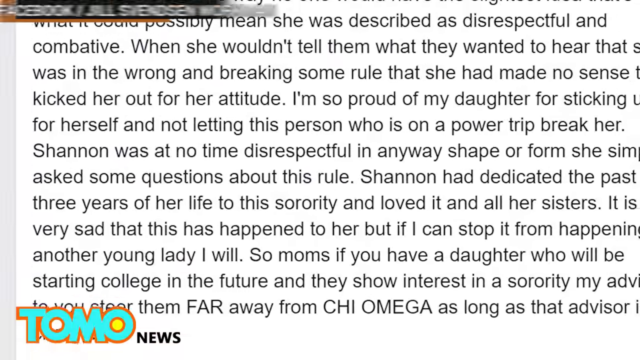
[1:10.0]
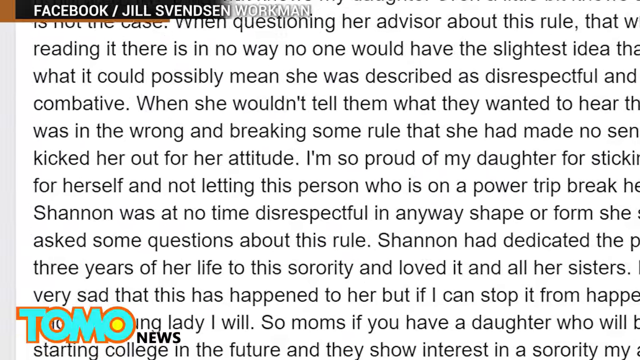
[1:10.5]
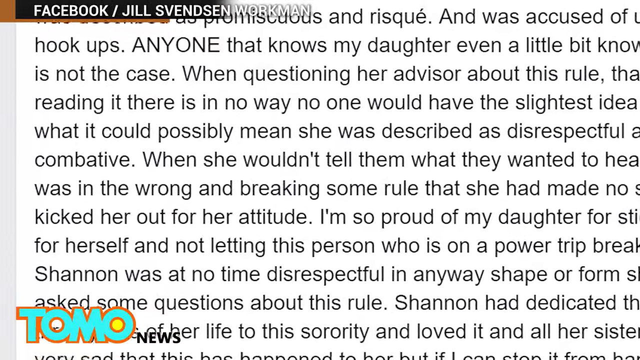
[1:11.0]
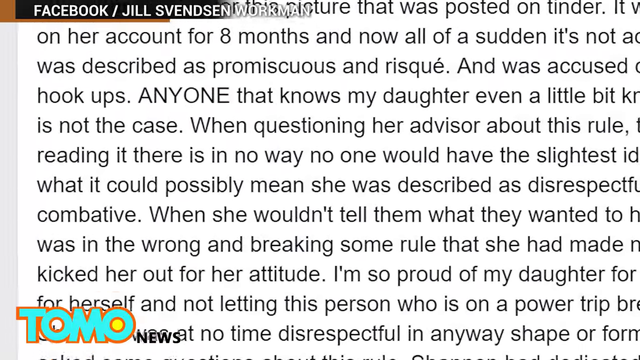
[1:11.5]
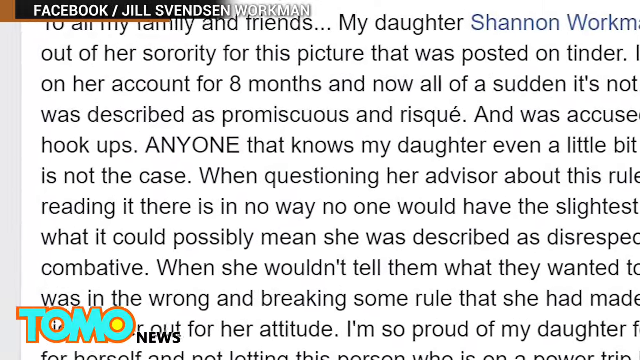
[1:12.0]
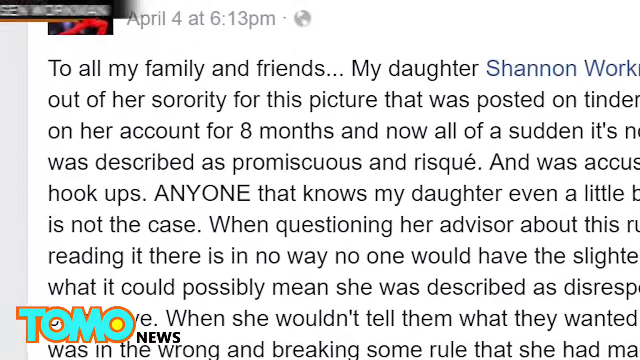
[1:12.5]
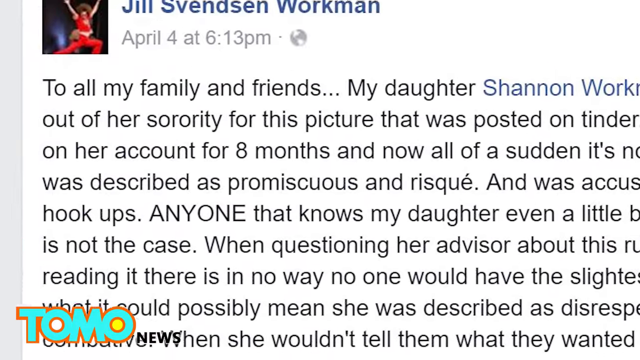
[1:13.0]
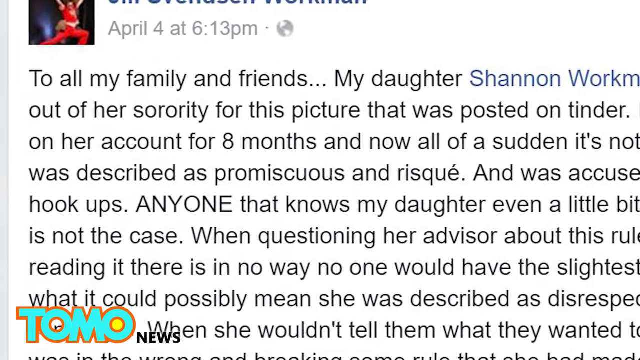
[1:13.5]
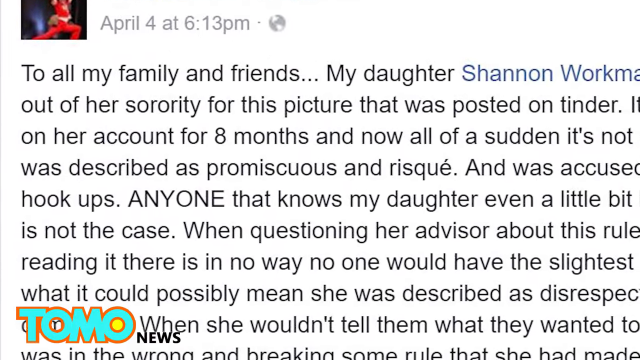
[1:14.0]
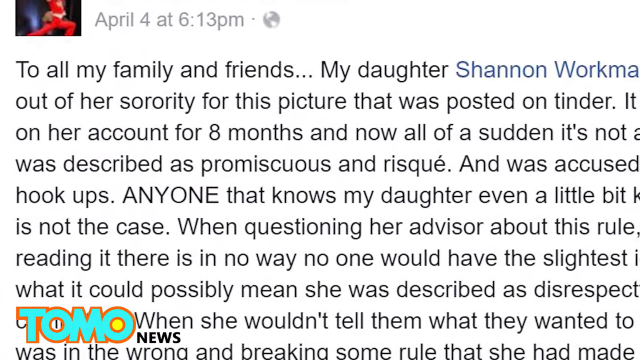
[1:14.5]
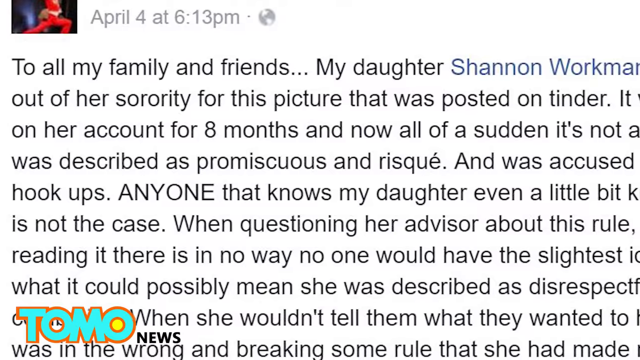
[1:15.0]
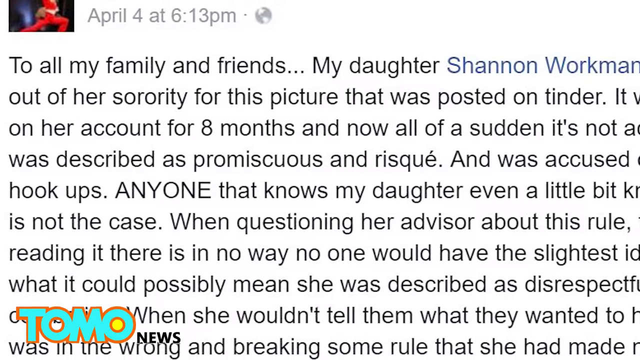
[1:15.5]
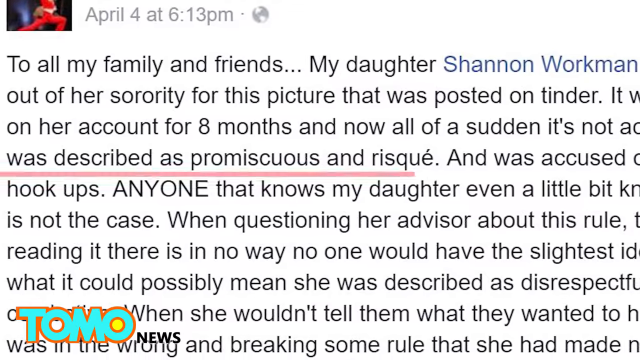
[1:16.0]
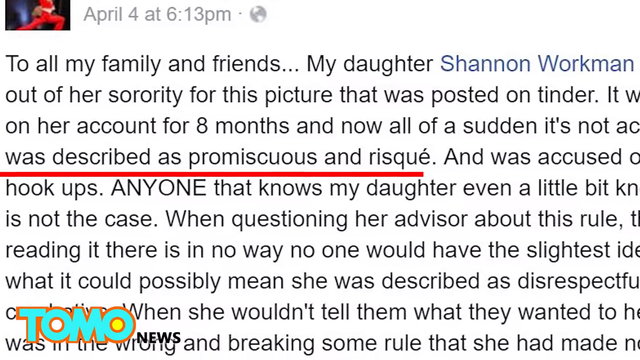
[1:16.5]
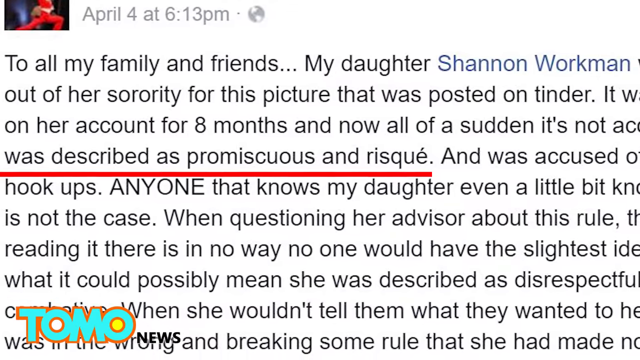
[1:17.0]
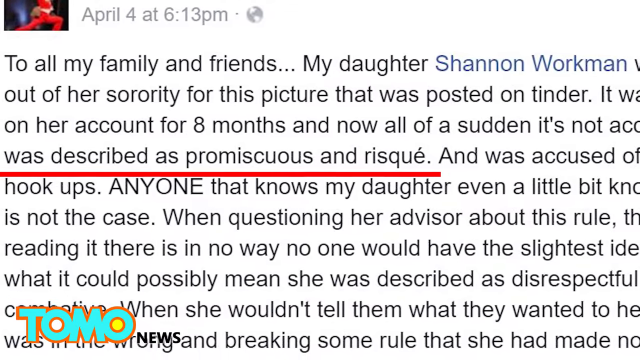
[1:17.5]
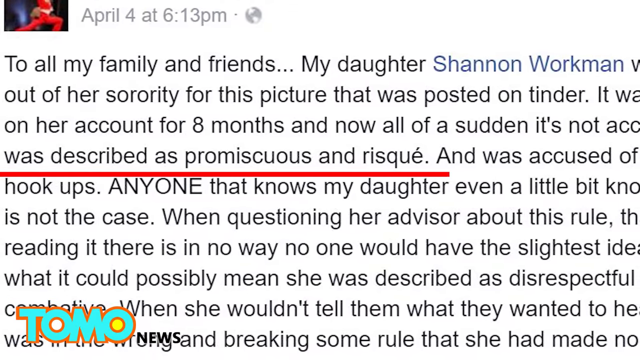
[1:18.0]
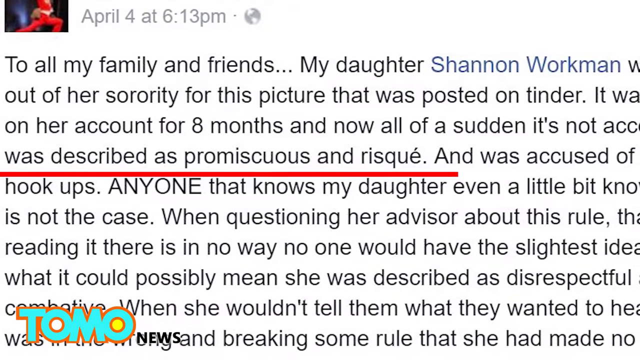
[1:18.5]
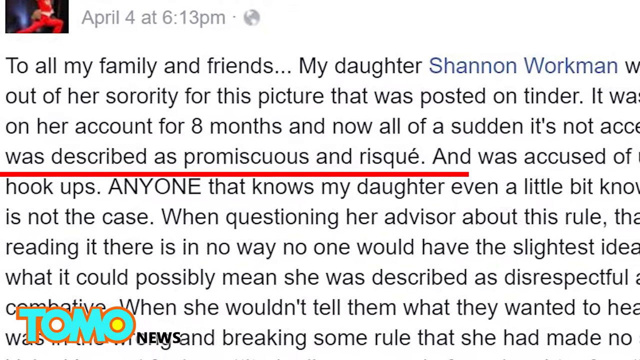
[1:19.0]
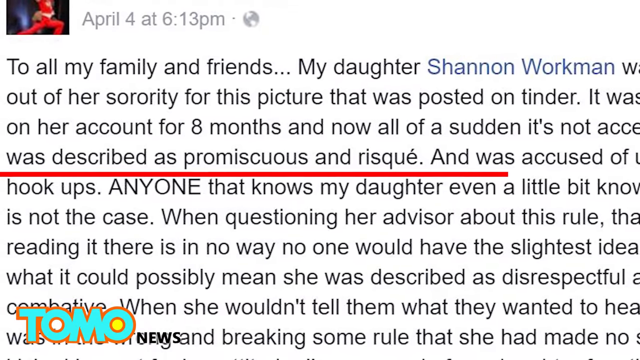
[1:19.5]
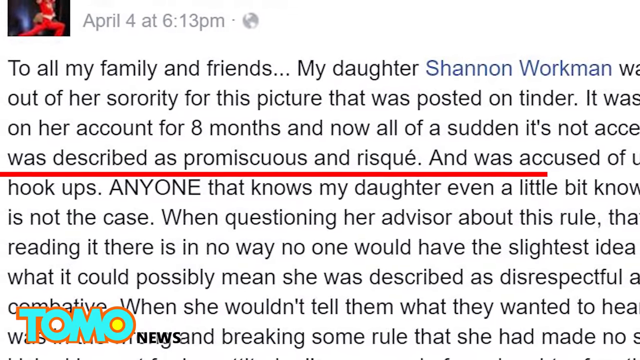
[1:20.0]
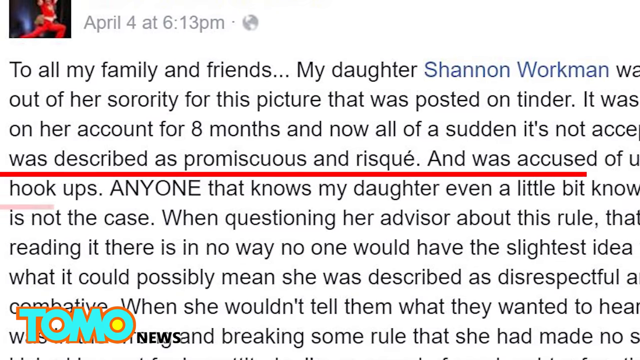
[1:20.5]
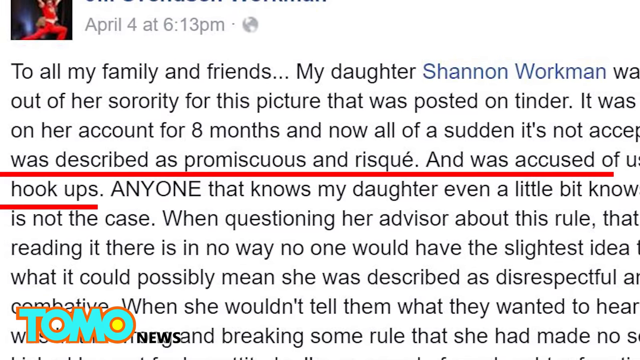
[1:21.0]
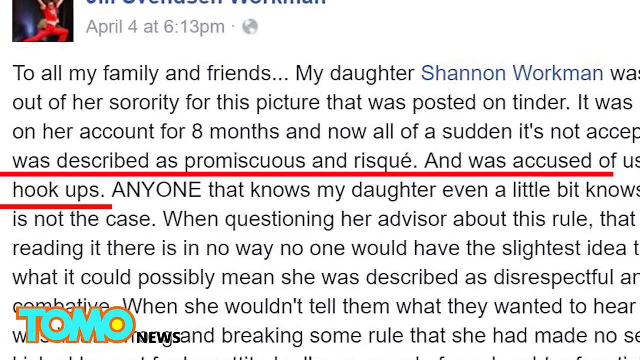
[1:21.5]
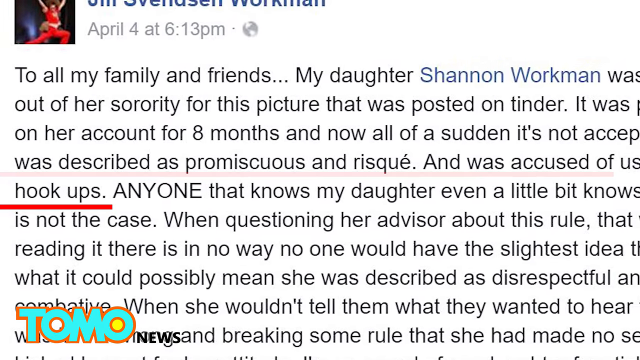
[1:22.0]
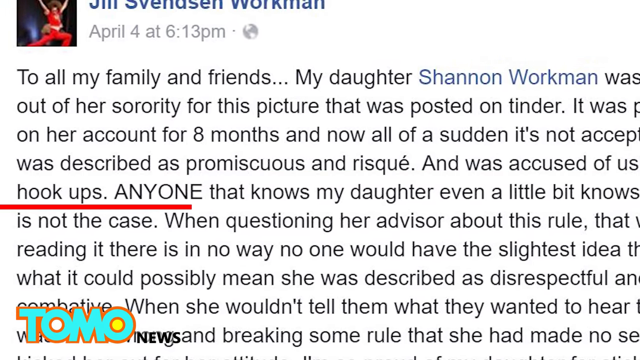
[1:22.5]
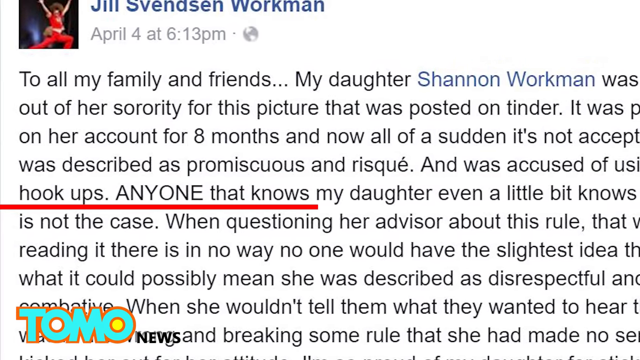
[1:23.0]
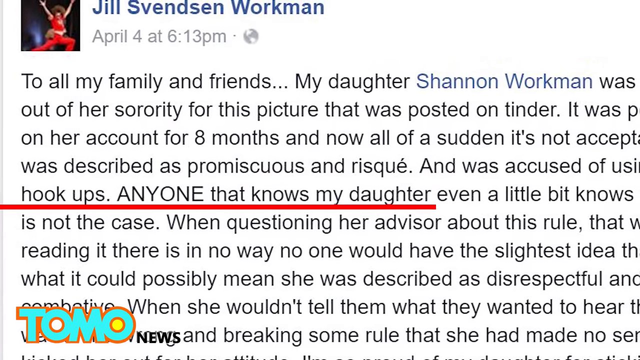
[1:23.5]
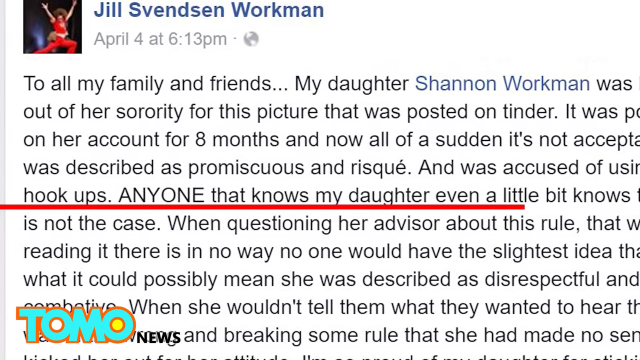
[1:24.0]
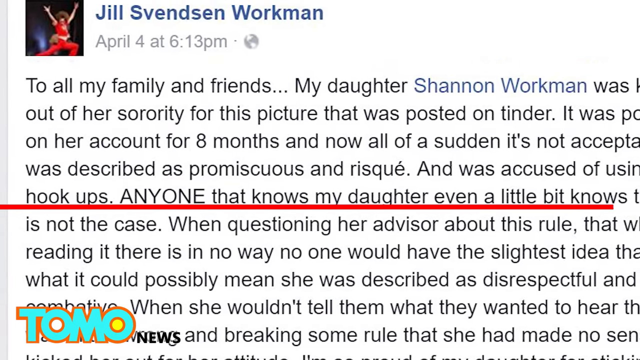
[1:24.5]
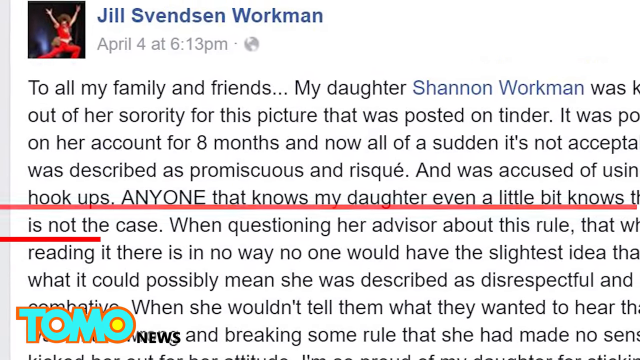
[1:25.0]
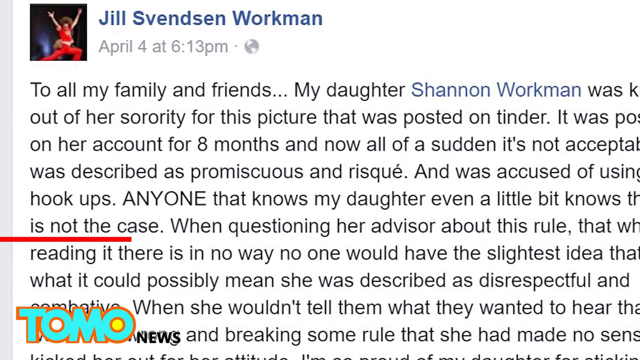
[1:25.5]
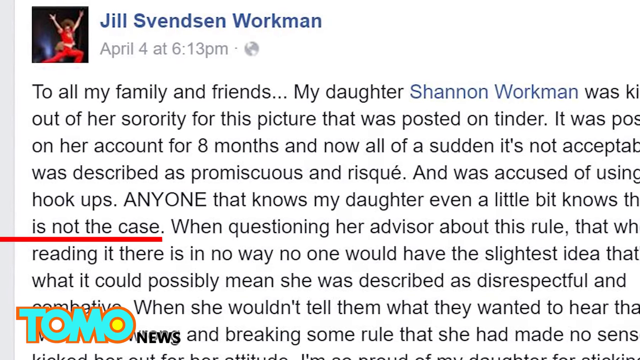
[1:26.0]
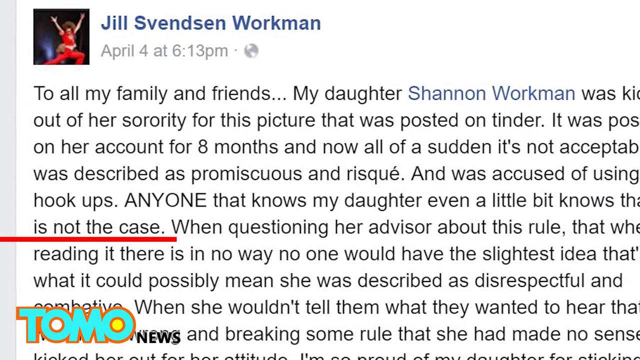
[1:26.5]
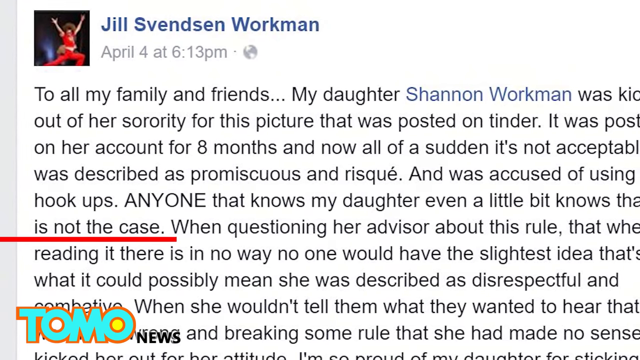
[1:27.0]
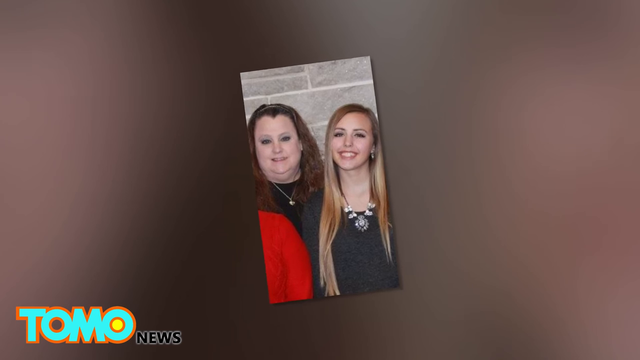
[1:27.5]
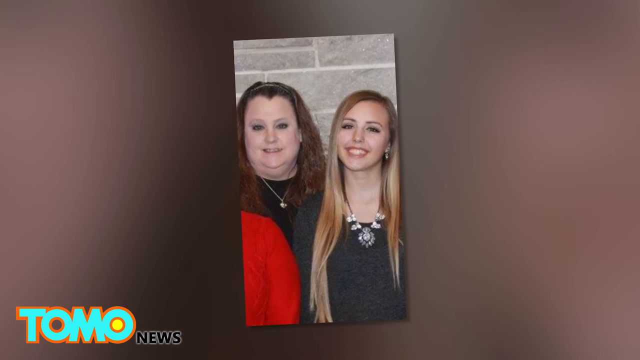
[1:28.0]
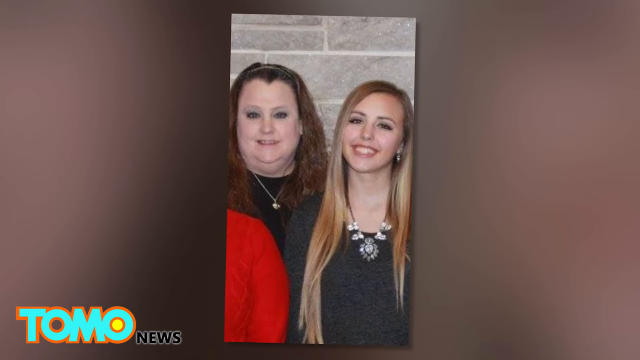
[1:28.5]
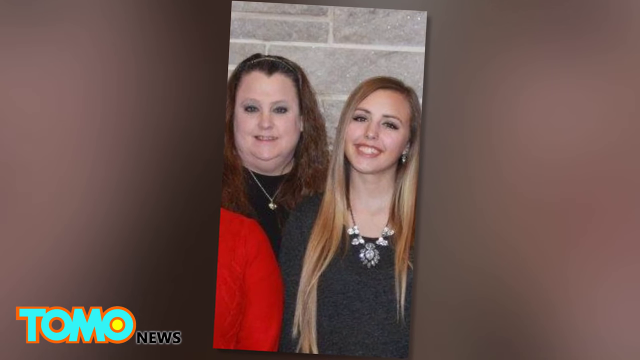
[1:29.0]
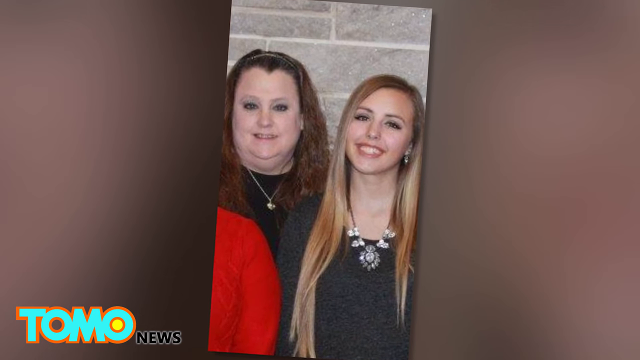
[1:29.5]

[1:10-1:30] A large amount of text fills the screen, apparently from a social media site, posted April 4th at 6:13 p.m. The camera is kind of zooming in. The text concerns someone's daughter, apparently written by the mother, and seems to raise a question about promiscuity; the controversy appears to be about the daughter's promiscuity. The camera kind of pans across the very long paragraph. A picture follows of the daughter, who is very young, standing with her mom, who is morbidly obese. The video returns to the same shot of the mother's paragraph, alternating between the paragraph and the picture of the mom and daughter. A computer-drawn red line appears on the screen, highlighting the portion of the post about promiscuity.